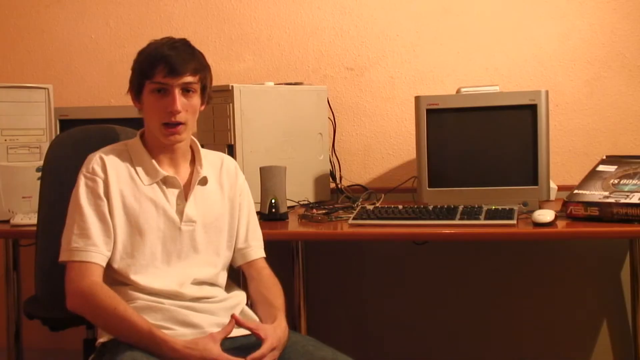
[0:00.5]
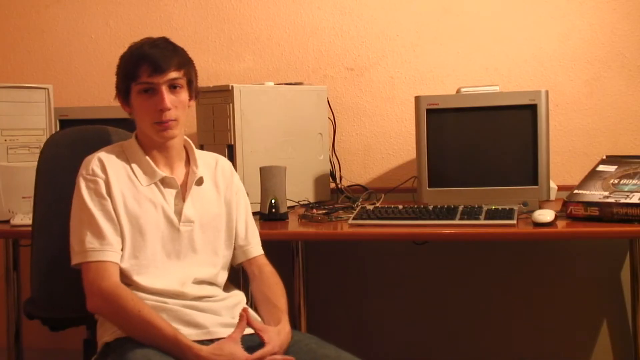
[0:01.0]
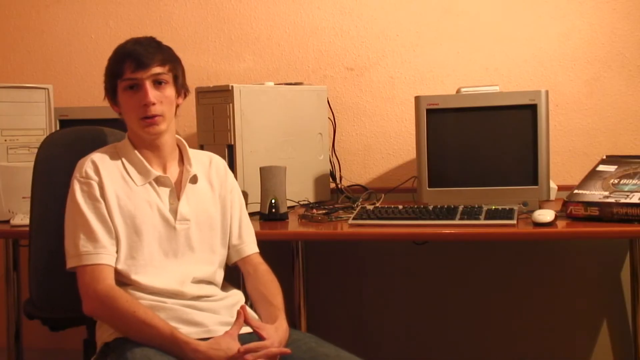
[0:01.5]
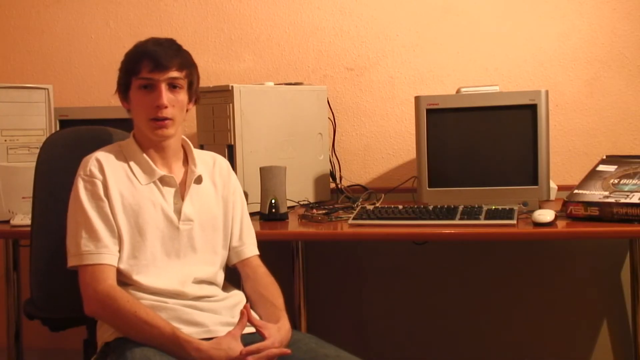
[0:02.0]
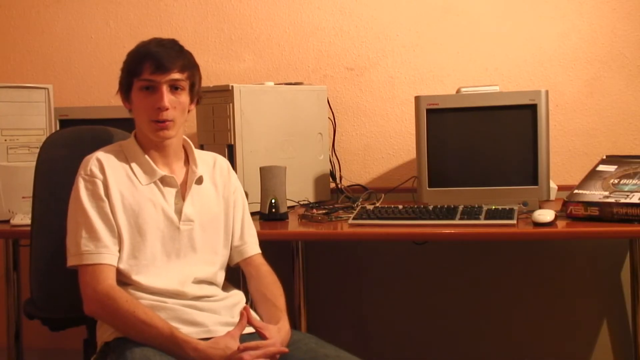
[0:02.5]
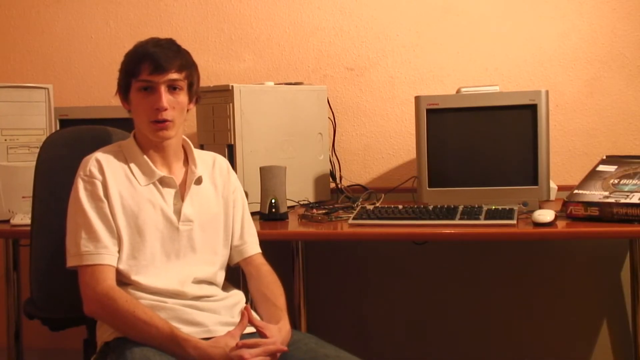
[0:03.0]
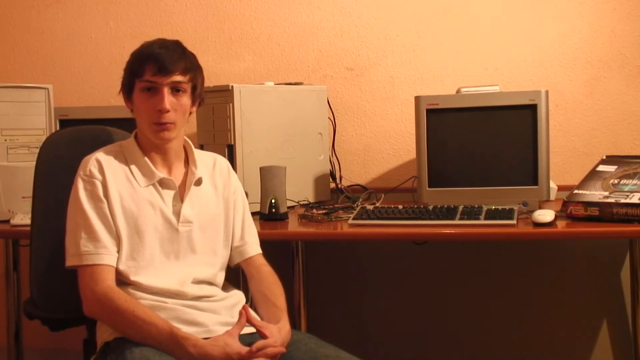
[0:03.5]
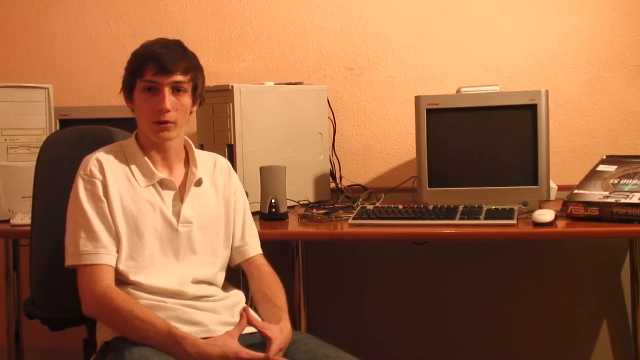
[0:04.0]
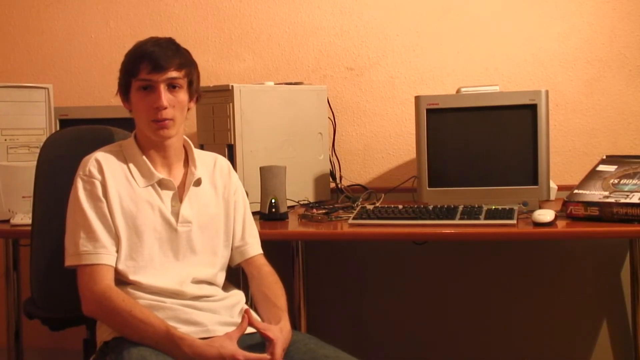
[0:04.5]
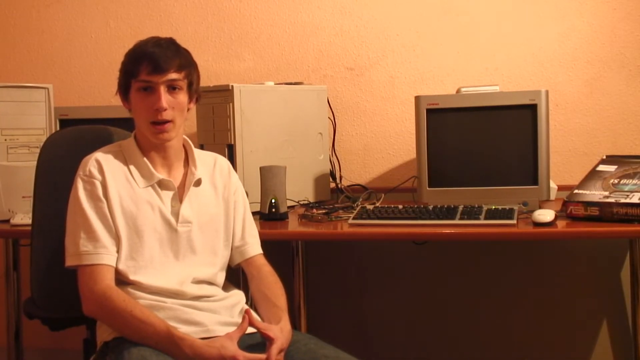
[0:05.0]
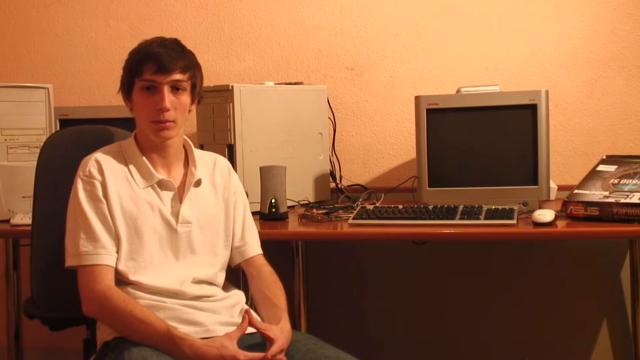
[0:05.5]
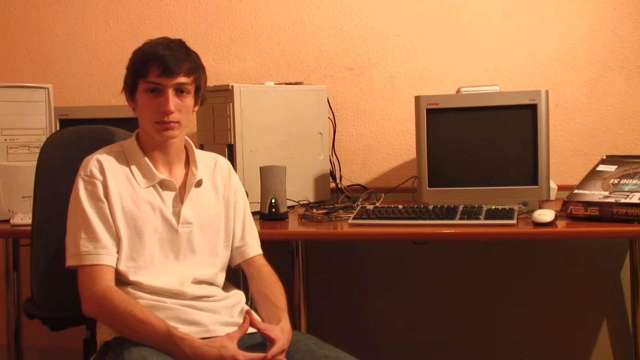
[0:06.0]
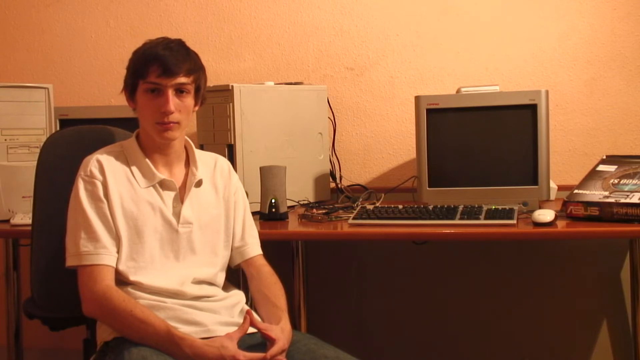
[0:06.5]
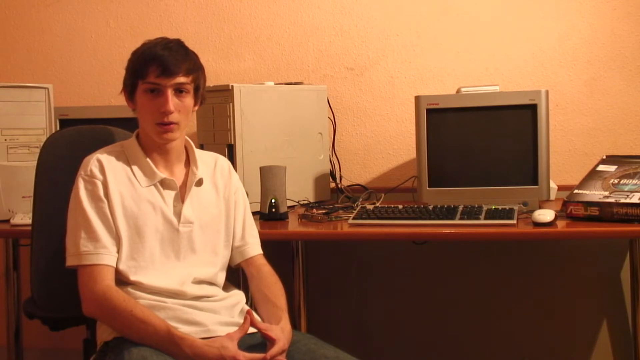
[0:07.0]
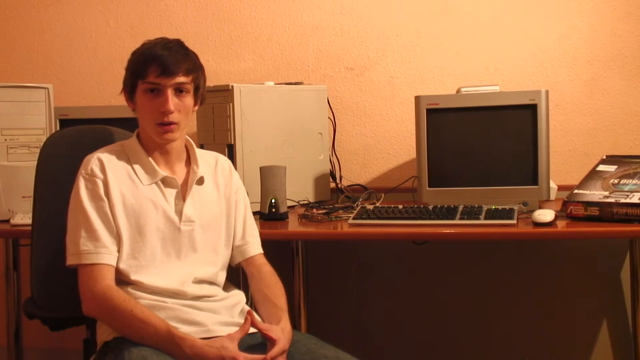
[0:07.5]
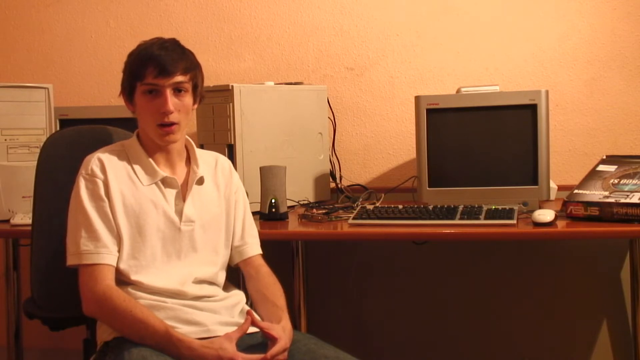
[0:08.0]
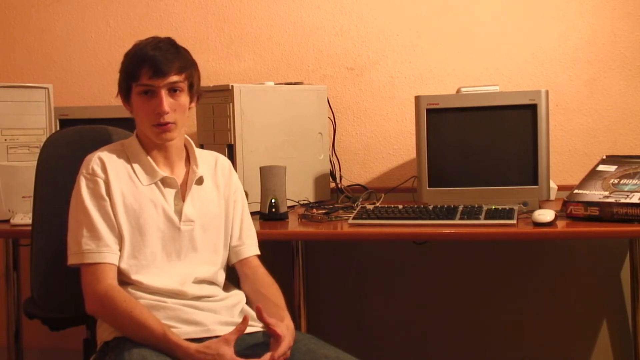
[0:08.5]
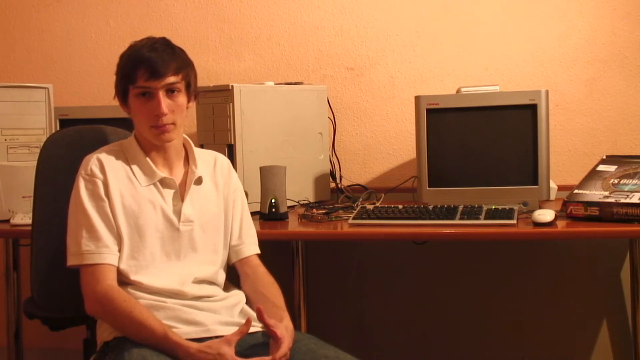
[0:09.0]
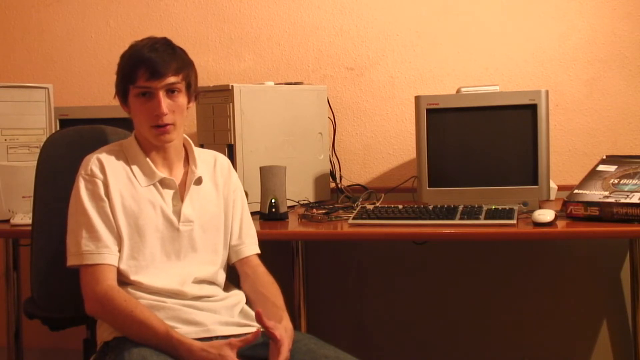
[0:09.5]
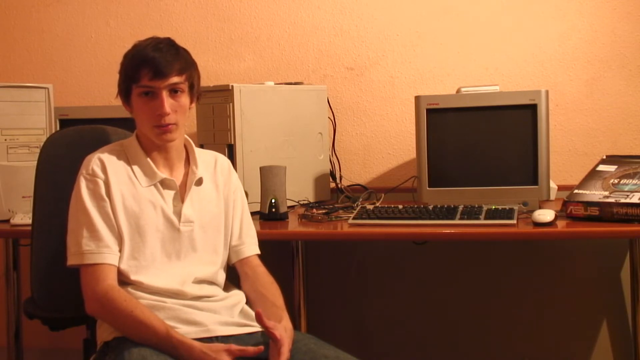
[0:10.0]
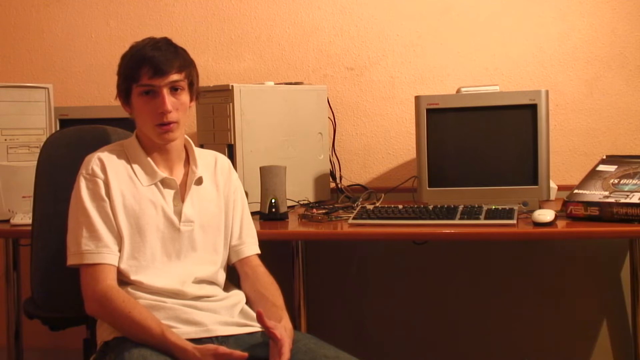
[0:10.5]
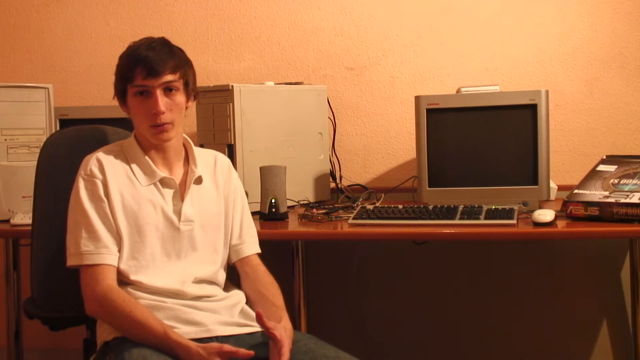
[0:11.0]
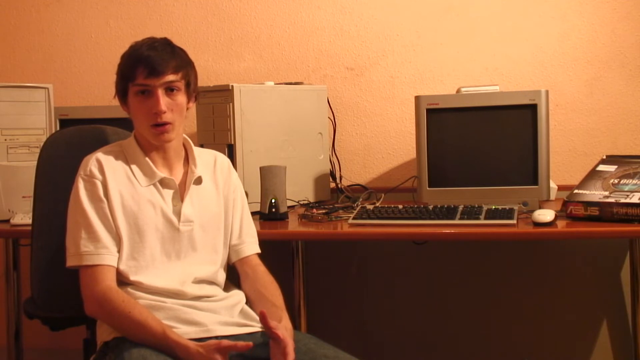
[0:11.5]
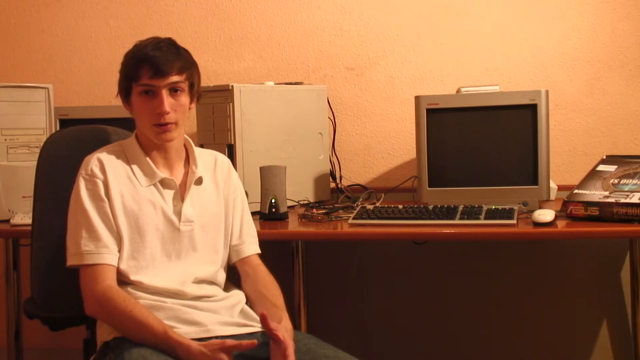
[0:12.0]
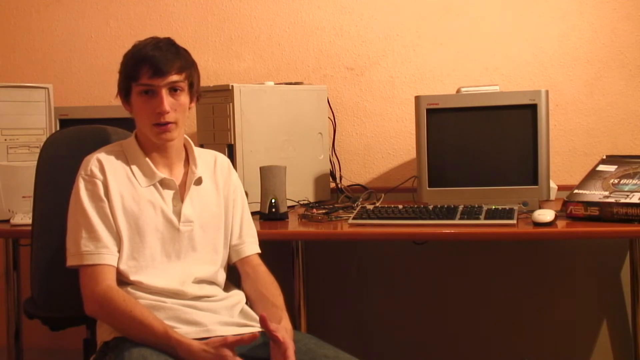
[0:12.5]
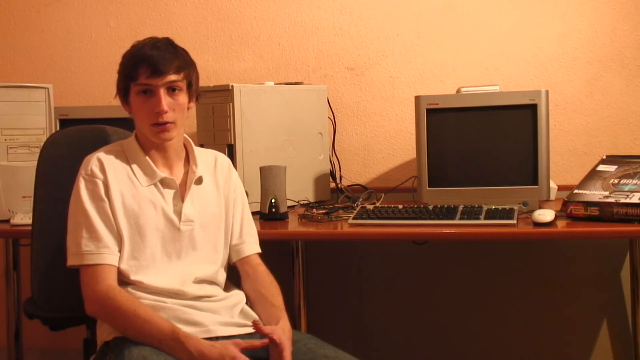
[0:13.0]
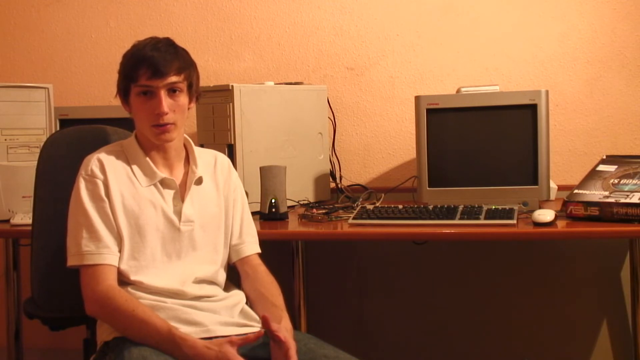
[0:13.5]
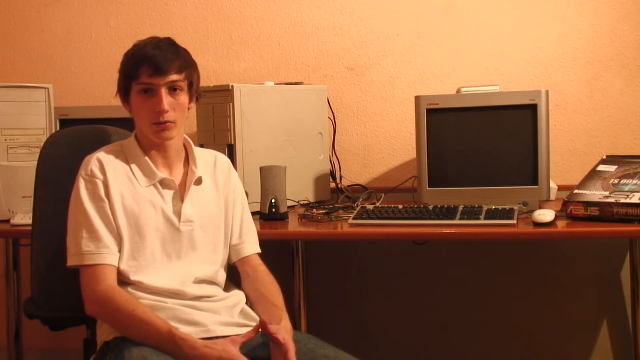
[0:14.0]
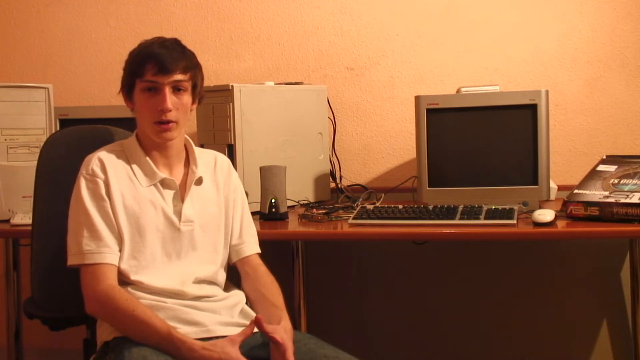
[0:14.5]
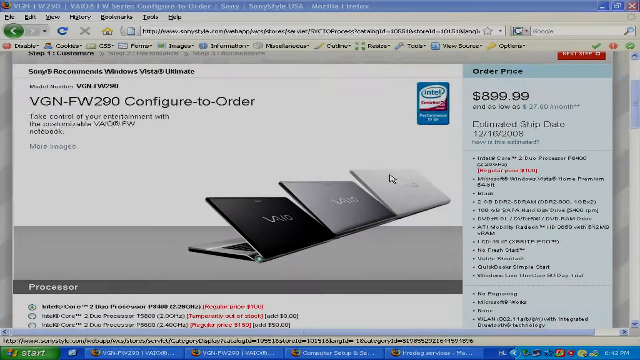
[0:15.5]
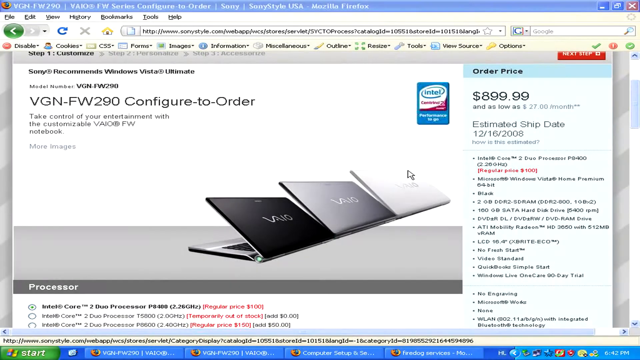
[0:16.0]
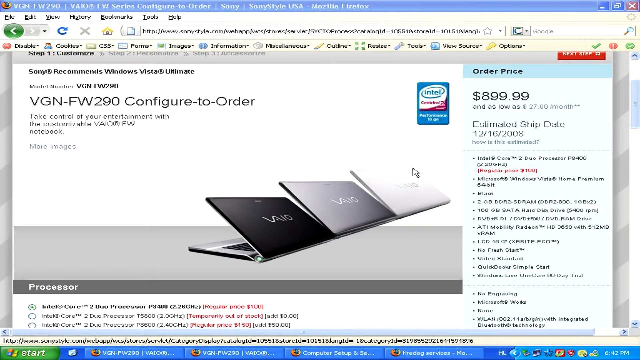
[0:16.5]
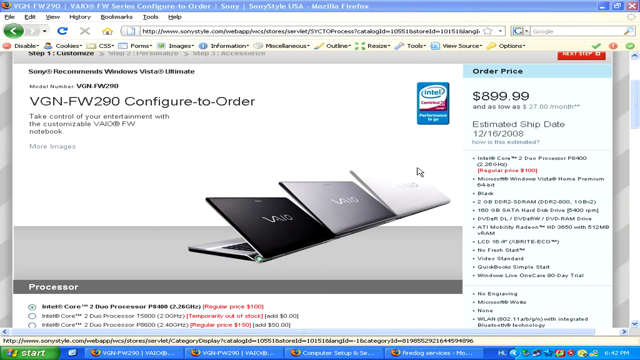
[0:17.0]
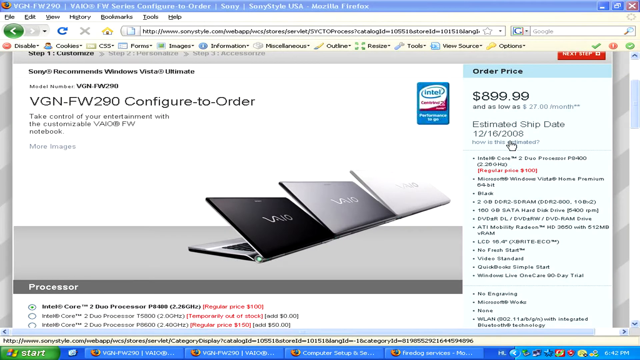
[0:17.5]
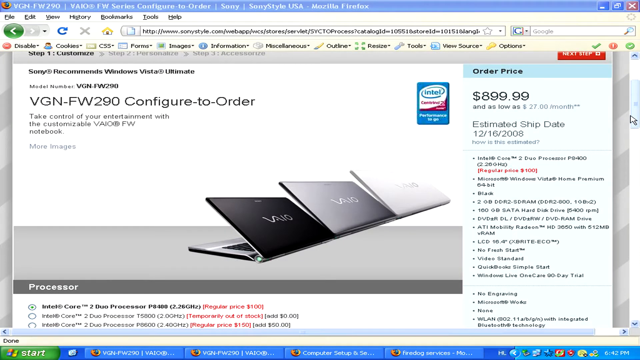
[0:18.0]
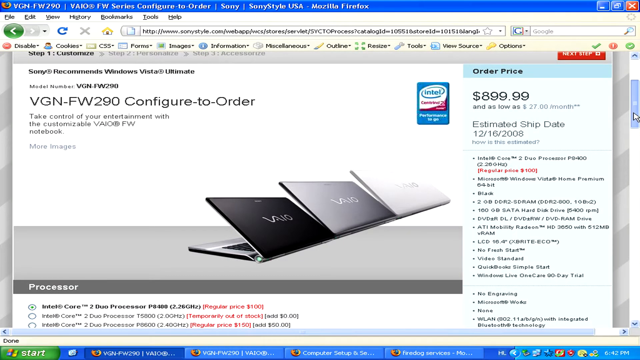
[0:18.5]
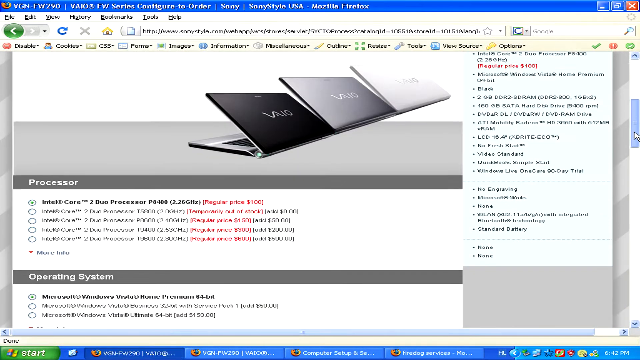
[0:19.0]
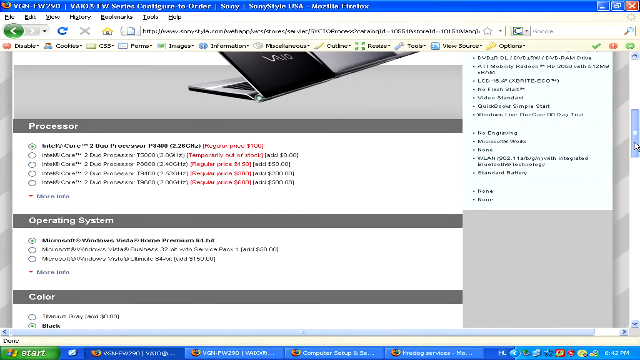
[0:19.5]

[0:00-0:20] A black background transitions to a young boy wearing a white collared shirt, sitting at a chair in a room. A very old-style computer with its keyboard is visible, along with computer parts in the background, and on the right side next to the mouse there is a box that says "Asus". He talks to the camera while holding his hands slightly together. The video then transitions to a screen that says "VGN FW290", with a page reading "Step 1 Customize" and "Sony recommends Windows Vista Ultimate", model number "VGN FW290". Text reads "VGN FW290 configure to order, take control of your entertainment with a customizable VAIO FW notebook." Three photos of a VAIO laptop are shown. The selected processor is an Intel Core 2 Duo processor PA400, with a regular price of $100. The configure-to-order price is $899, or as low as $27 a month, and the estimated ship date is 12-16-2008. The computer's full specifications are listed: video standard, no fresh start, two gigs of SD RAM, no engraving, and integrated WLAN with some newer technology. The page is scrolled down to show more information about the processor, the operating system and the color.